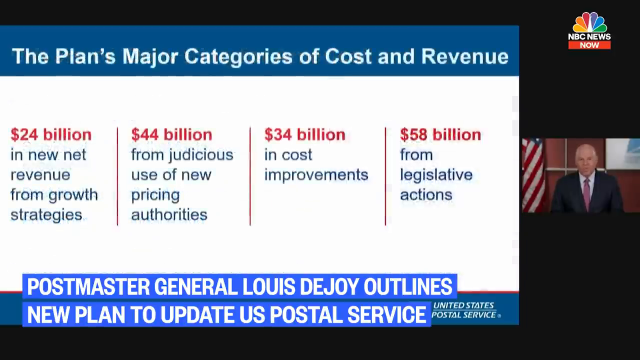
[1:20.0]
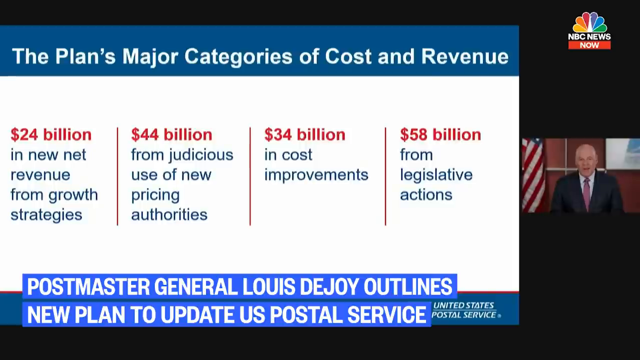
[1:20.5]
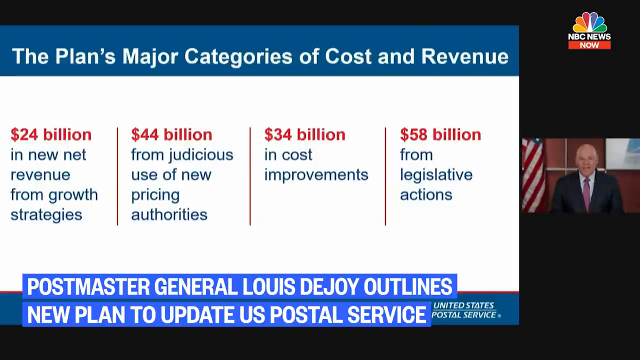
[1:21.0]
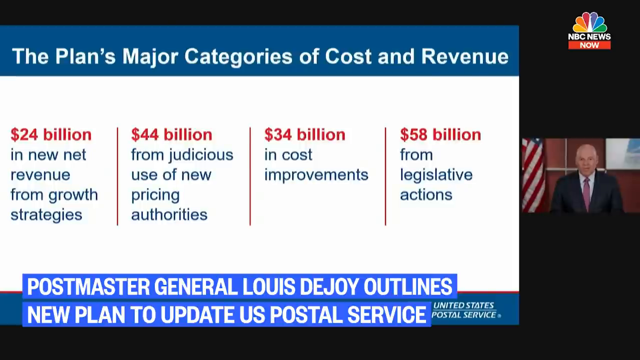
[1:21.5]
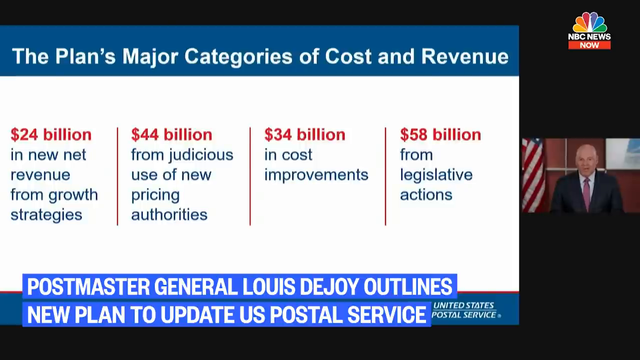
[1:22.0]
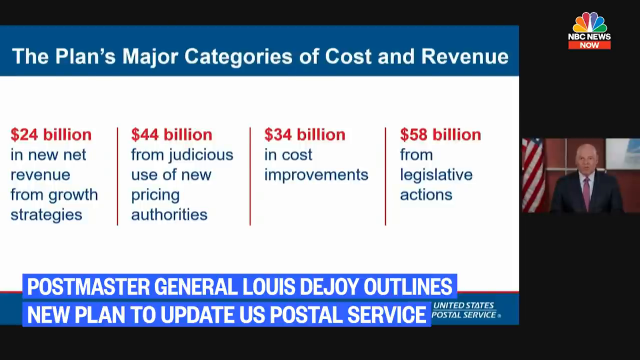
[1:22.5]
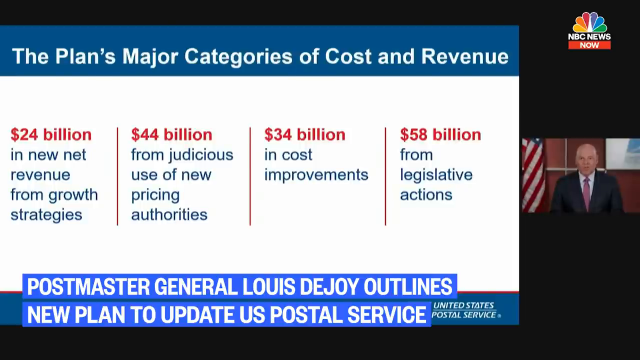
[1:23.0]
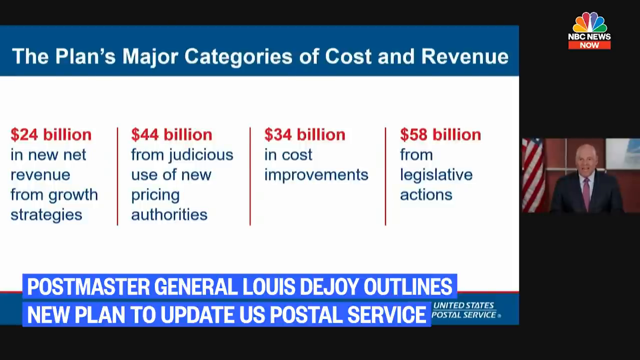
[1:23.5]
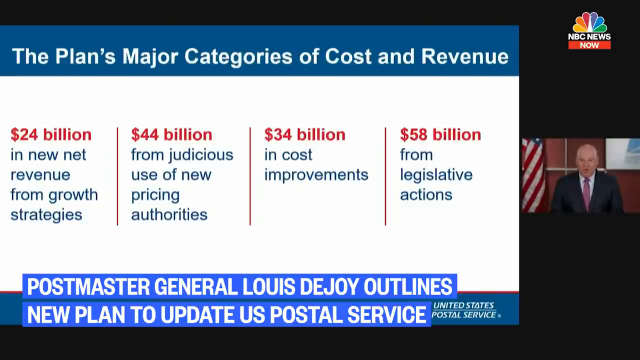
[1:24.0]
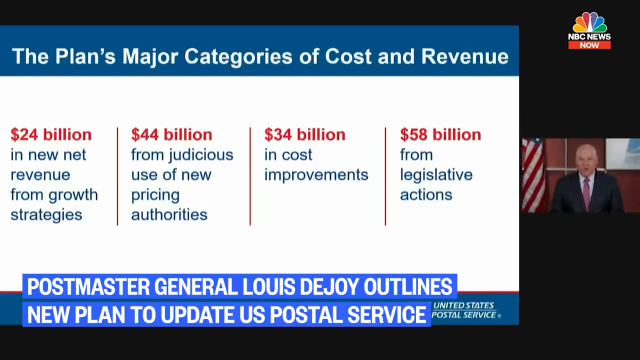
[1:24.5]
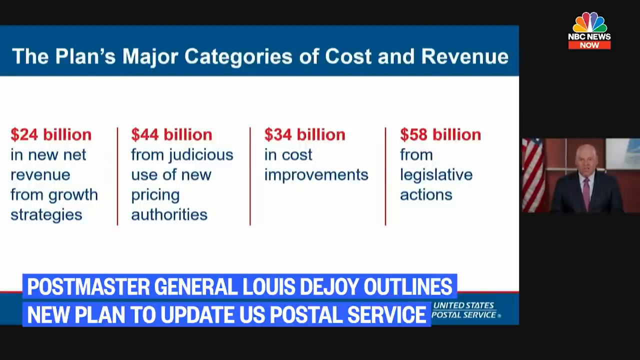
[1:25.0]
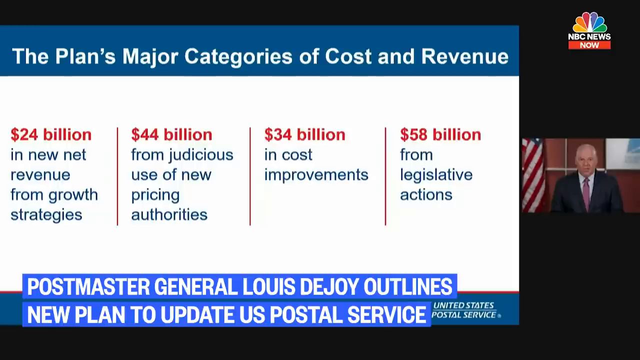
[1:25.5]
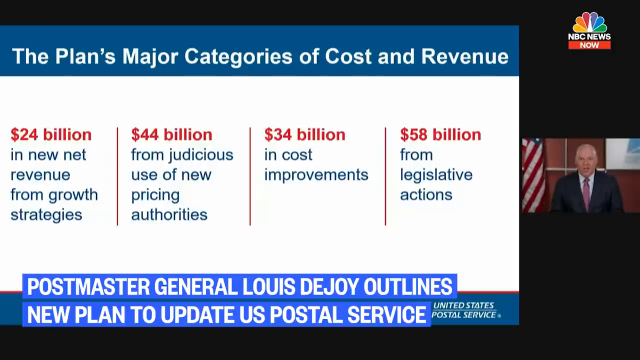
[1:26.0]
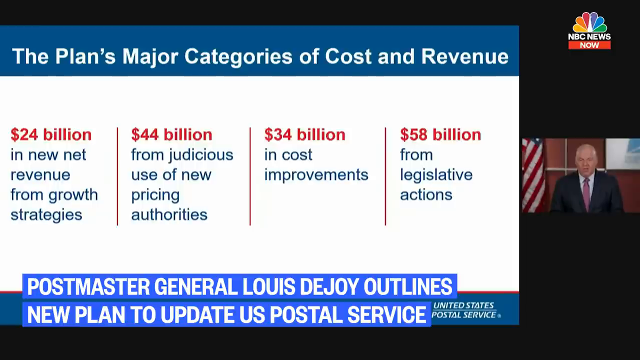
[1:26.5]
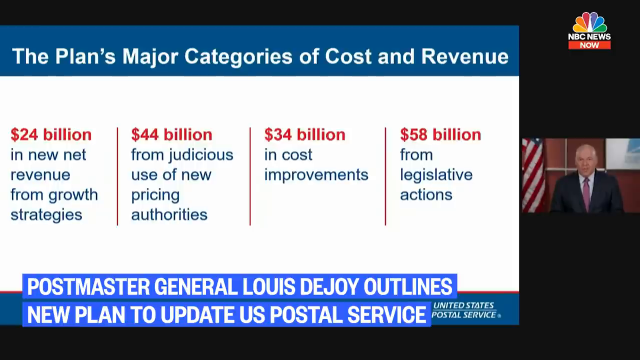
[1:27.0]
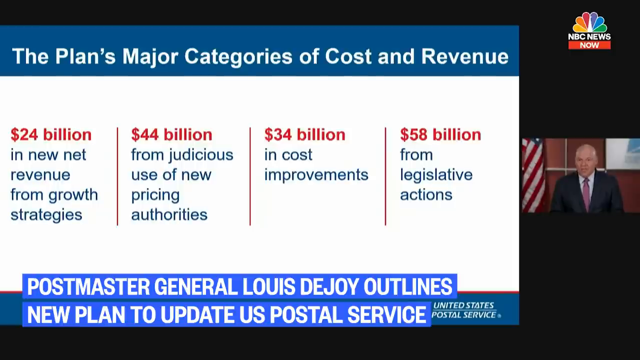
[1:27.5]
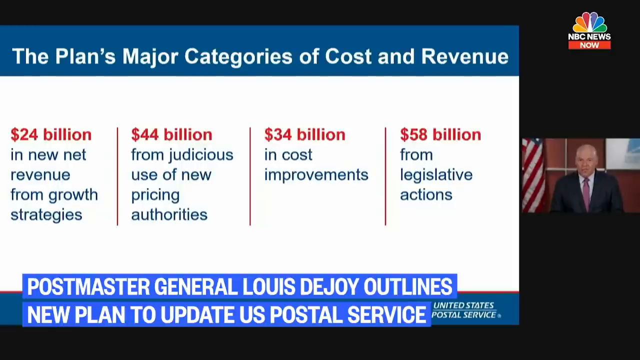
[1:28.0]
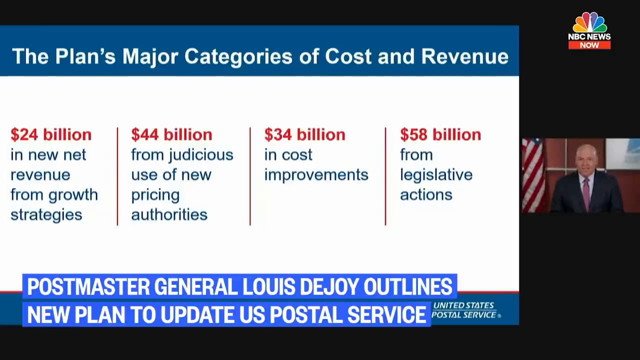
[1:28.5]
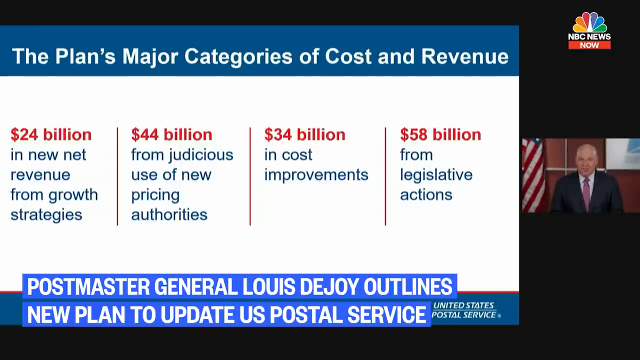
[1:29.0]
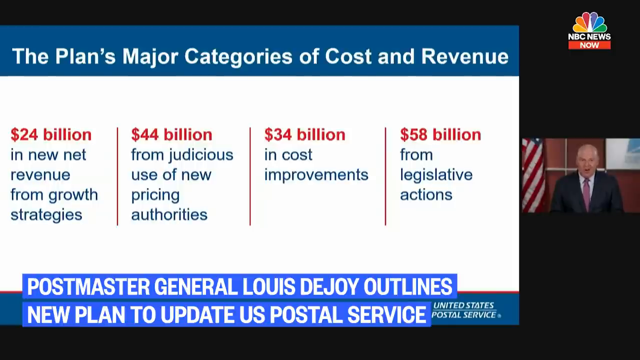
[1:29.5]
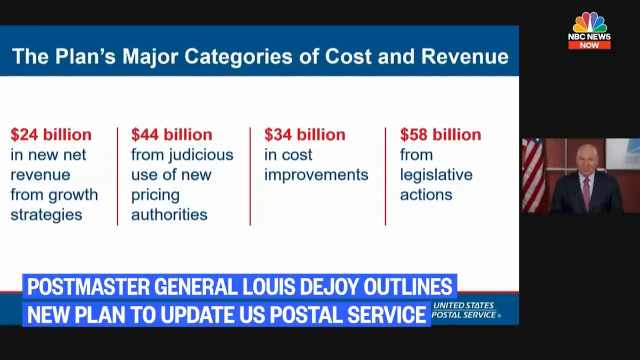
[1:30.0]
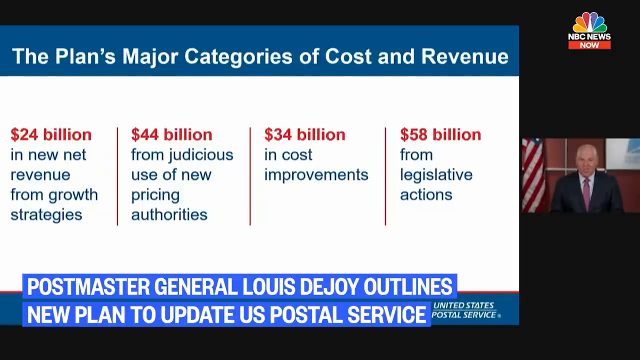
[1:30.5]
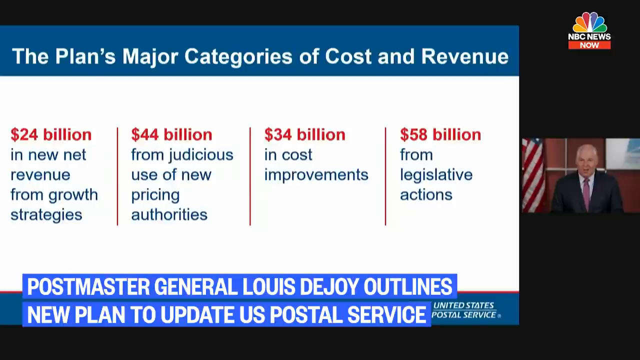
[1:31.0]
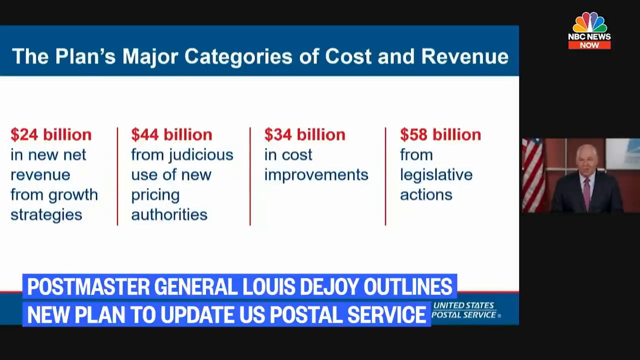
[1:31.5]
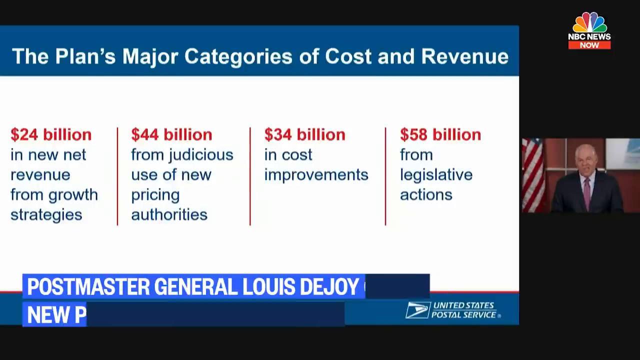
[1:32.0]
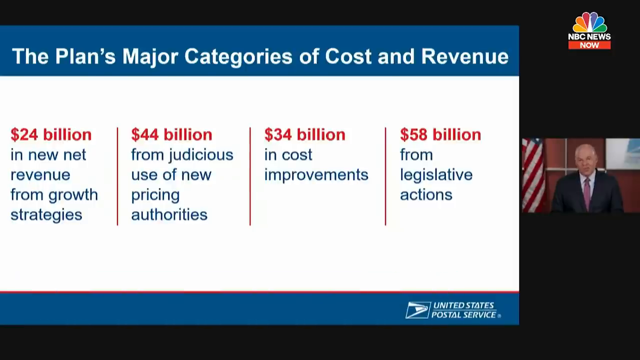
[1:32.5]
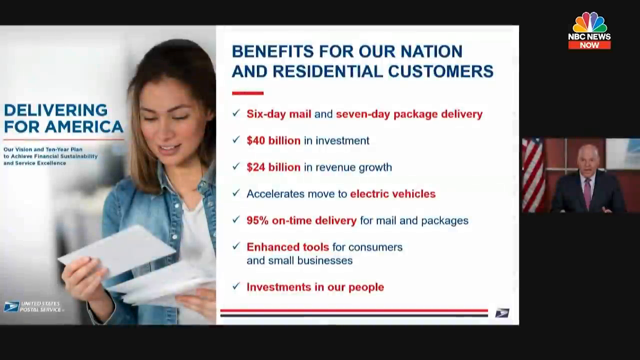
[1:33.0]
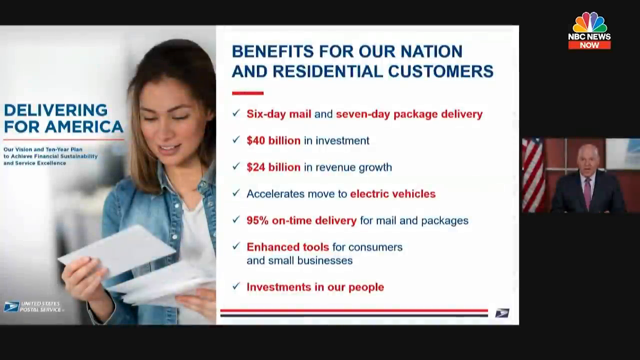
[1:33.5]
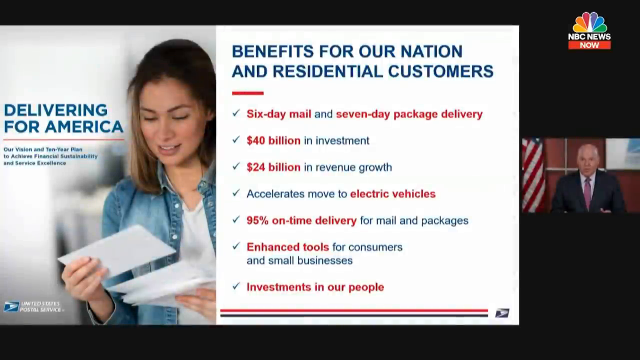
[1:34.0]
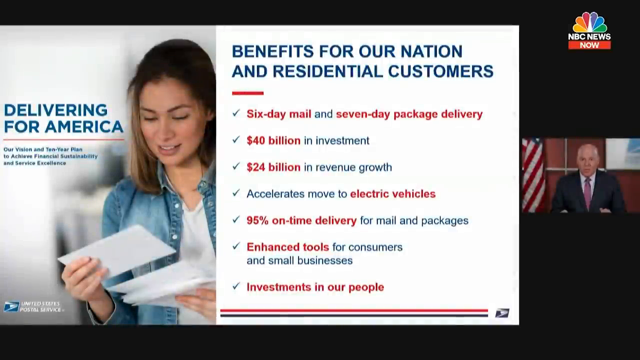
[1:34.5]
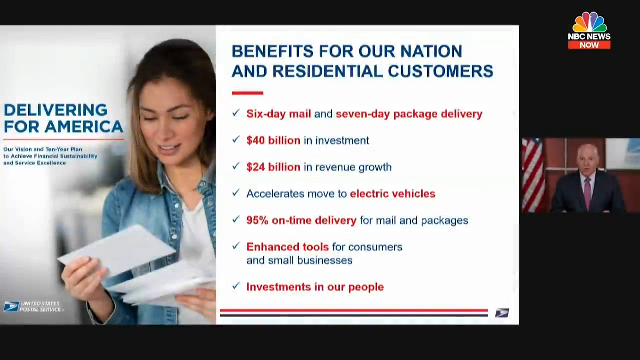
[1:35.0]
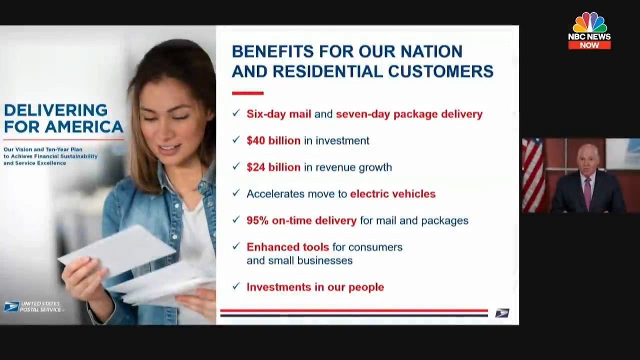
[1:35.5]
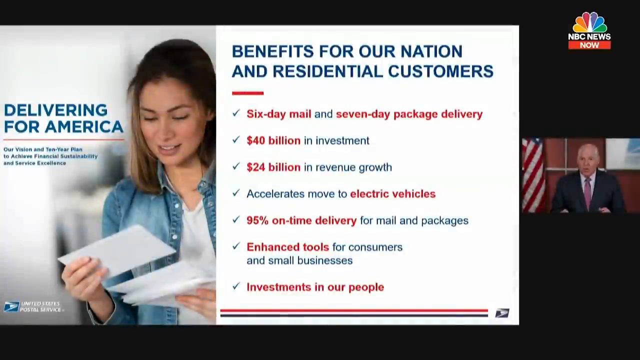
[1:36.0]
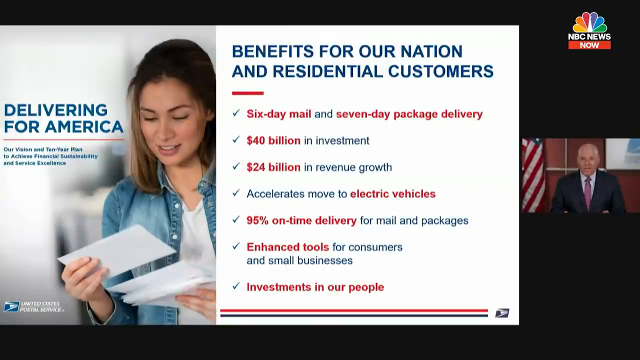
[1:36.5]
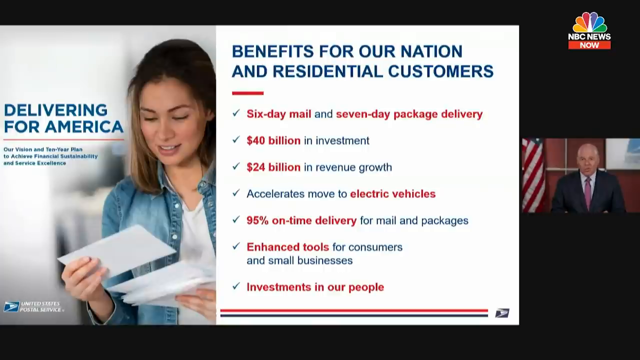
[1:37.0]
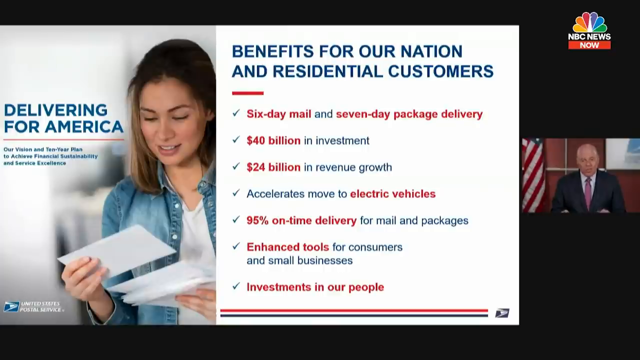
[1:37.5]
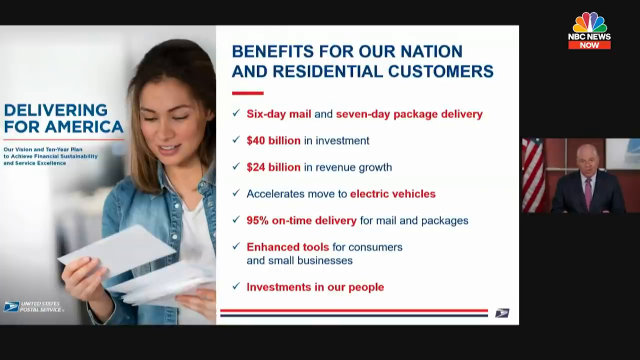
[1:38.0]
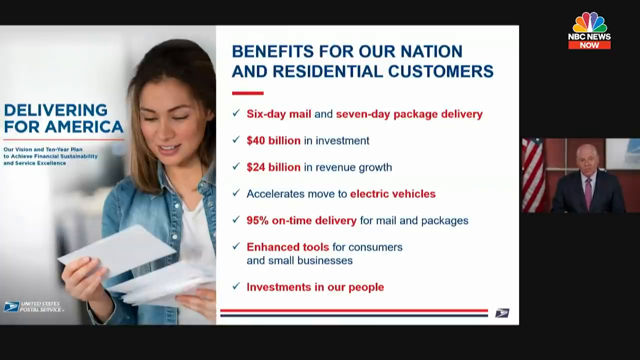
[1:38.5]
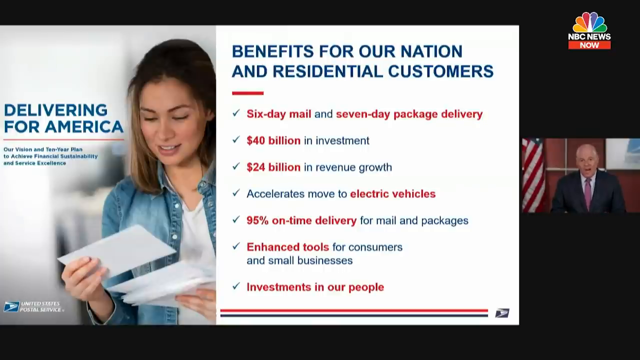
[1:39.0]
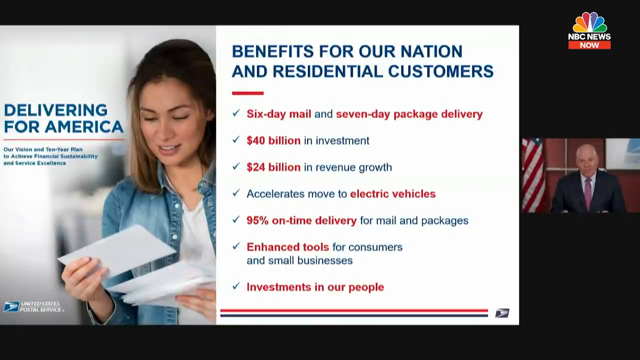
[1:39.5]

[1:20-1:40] A news segment reports on a report by the United States Postal Service, showing a USPS slide on the left. On the right side, a bald person in a black suit, a violet shirt, and a maroon tie talks directly to the camera. To his left is an American flag, and to his right is a monitor hanging on a maroon wall, with some wooden beams going across the wall. At the top of the slide is a blue border with the words "the plan's major categories of cost and revenue" written in white. Below it, on a white background, are the words "$24 billion in new net revenue from growth strategies," and to the right of that "$44 billion from judicious use of new pricing authorities," then "$34 billion in cost improvements," then "$58 billion from legislative actions." Under all of this, overlaid text reads "Postmaster General Louis DeJoy outlines new plan to update U.S. Postal Service."